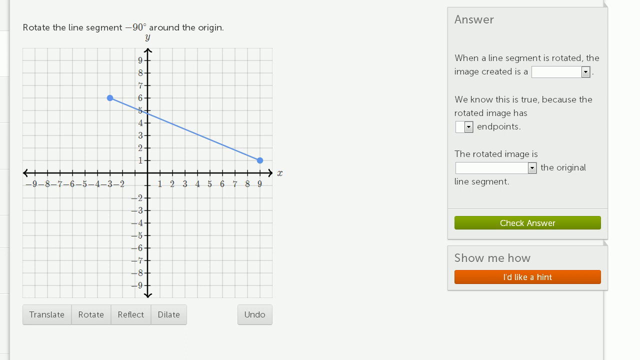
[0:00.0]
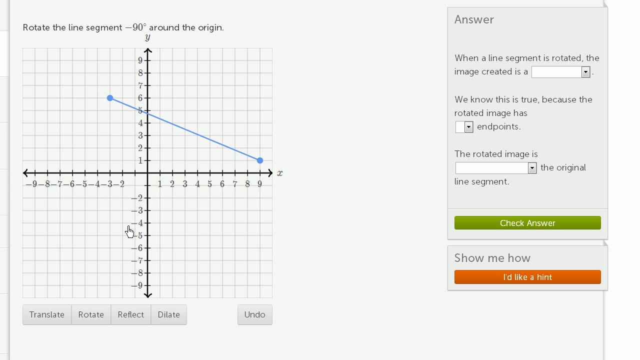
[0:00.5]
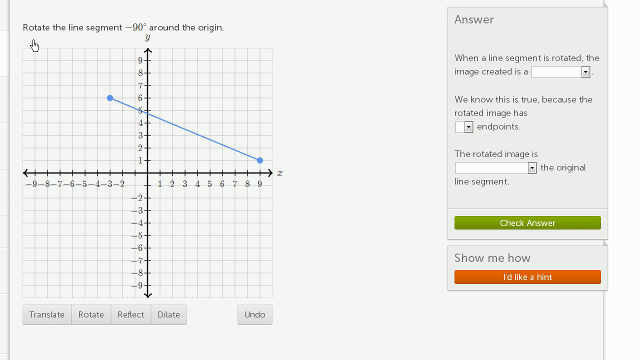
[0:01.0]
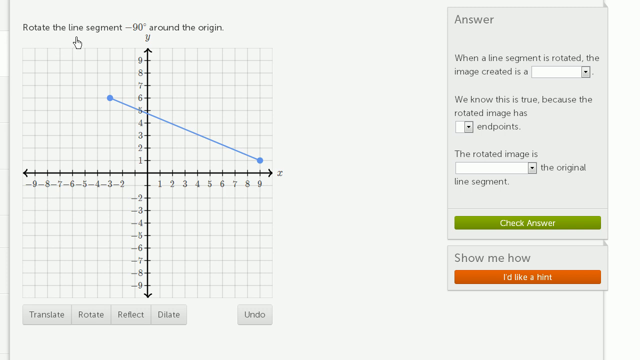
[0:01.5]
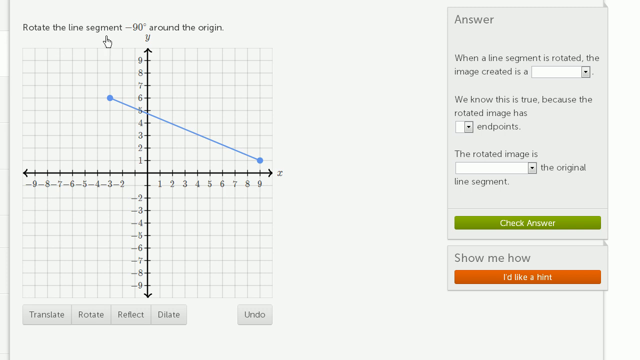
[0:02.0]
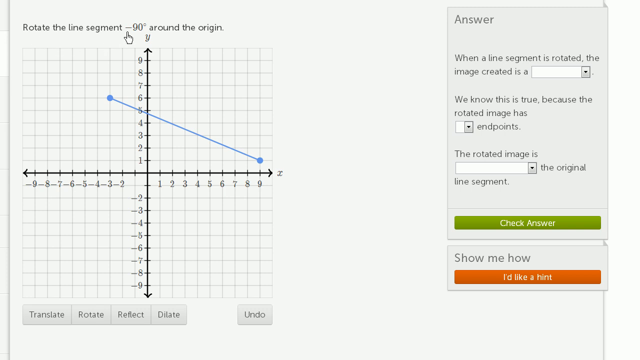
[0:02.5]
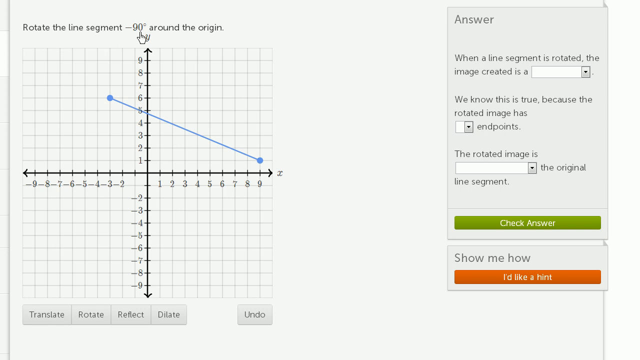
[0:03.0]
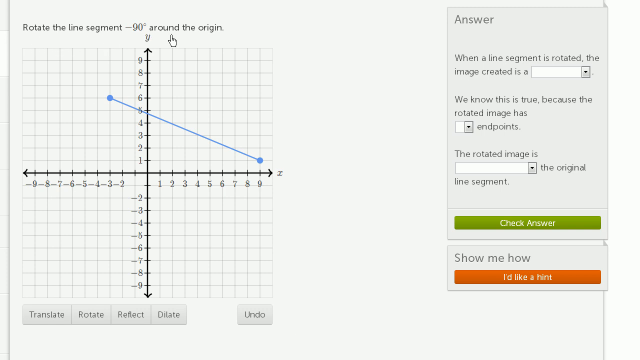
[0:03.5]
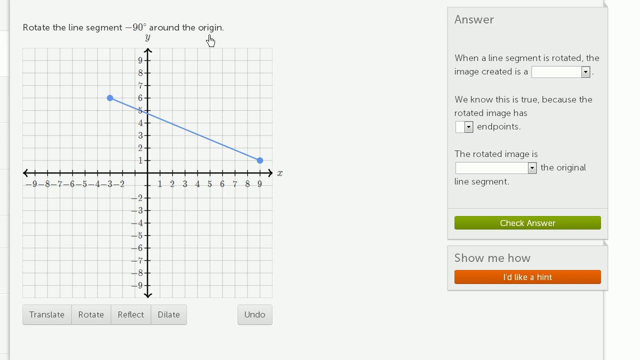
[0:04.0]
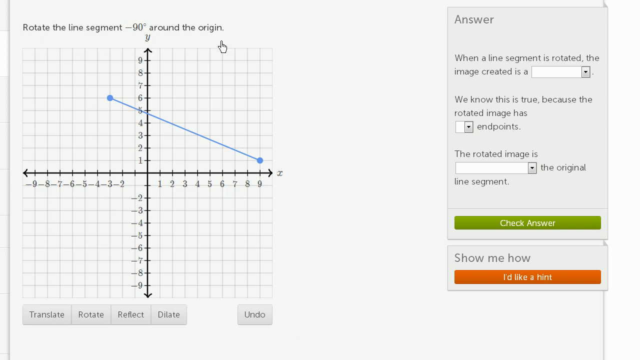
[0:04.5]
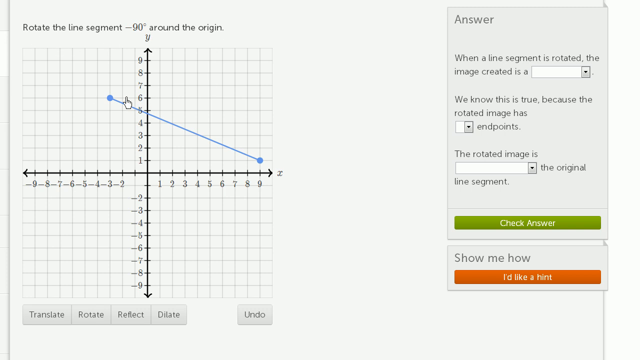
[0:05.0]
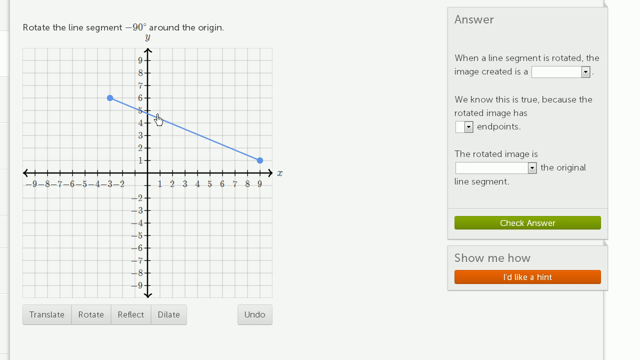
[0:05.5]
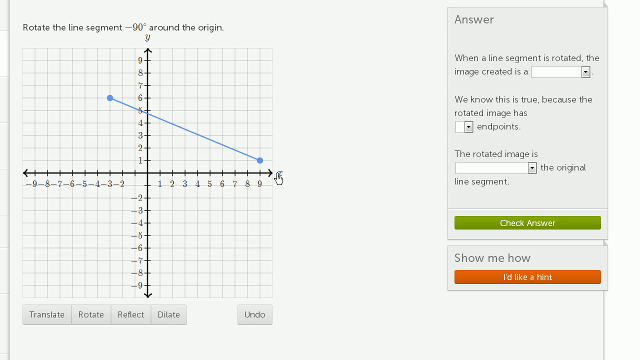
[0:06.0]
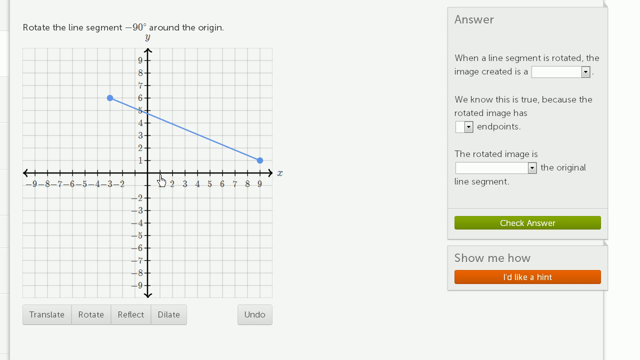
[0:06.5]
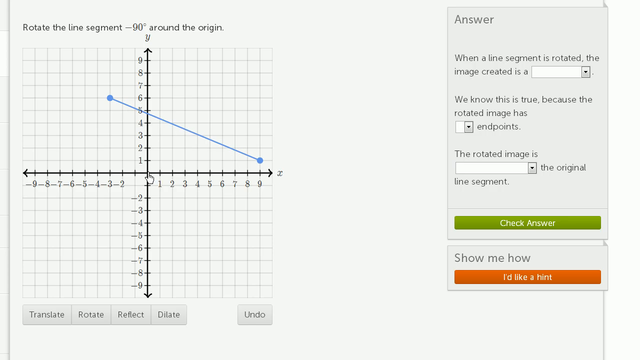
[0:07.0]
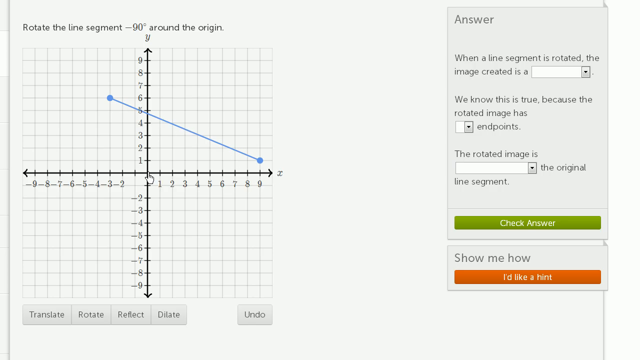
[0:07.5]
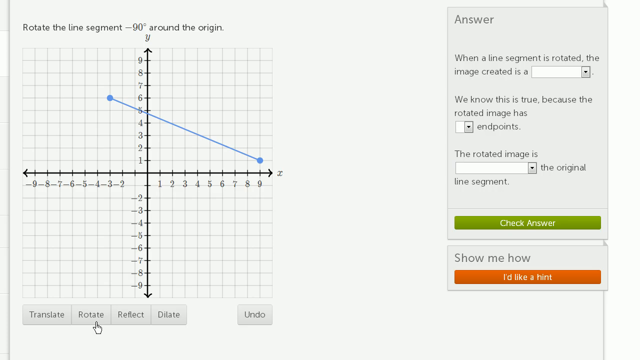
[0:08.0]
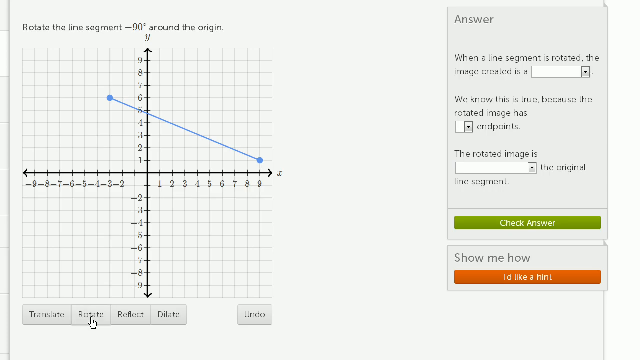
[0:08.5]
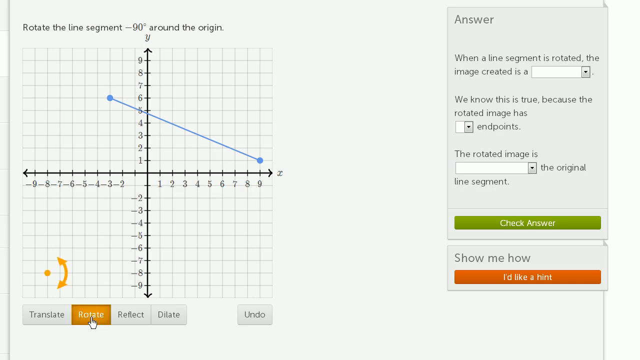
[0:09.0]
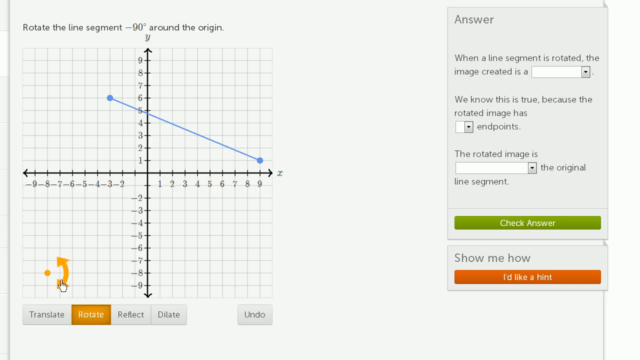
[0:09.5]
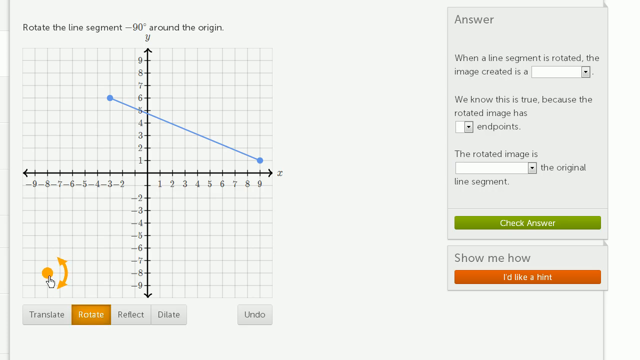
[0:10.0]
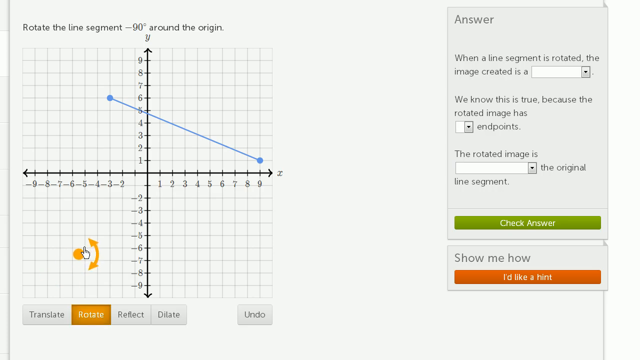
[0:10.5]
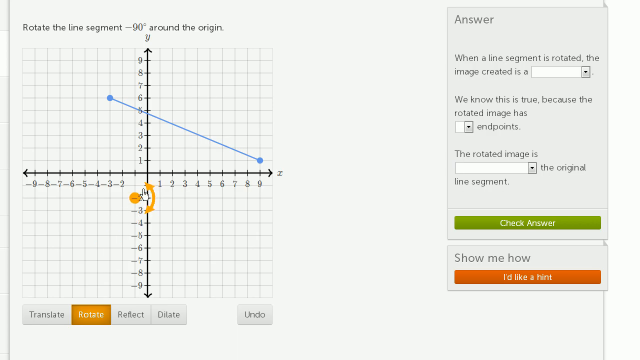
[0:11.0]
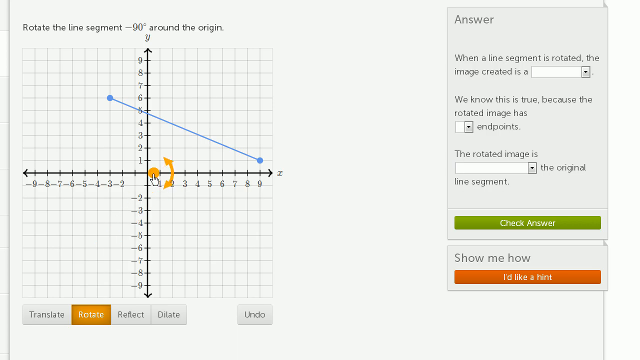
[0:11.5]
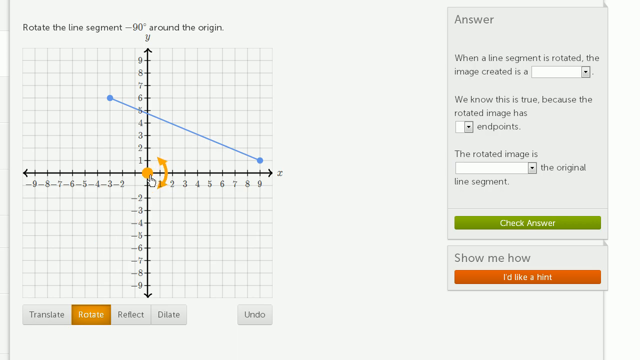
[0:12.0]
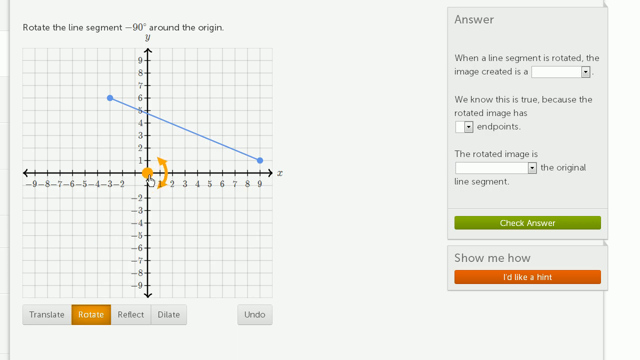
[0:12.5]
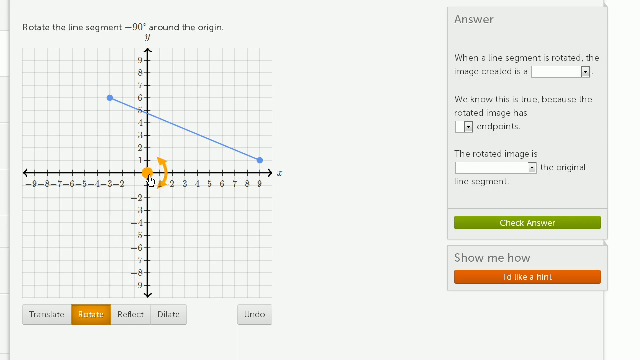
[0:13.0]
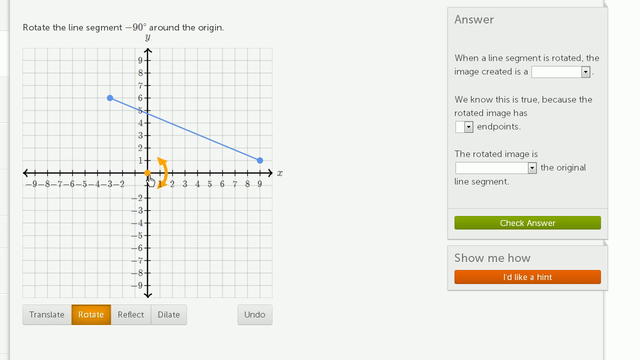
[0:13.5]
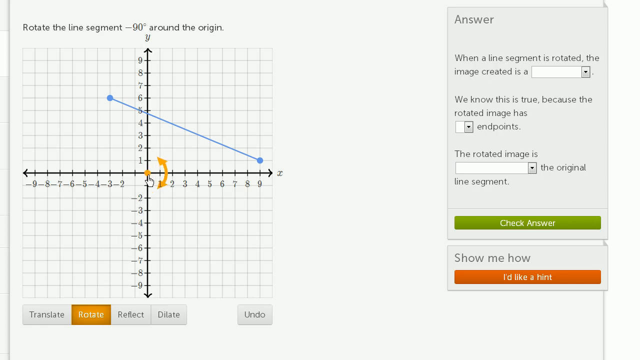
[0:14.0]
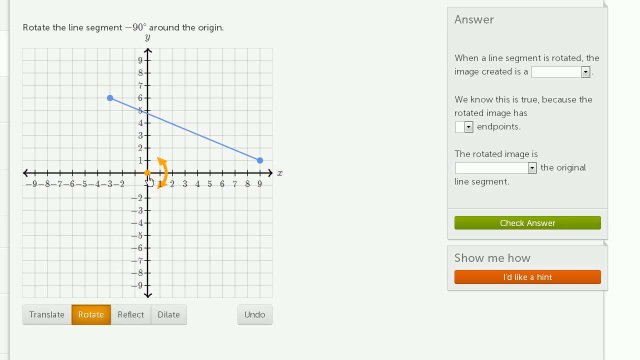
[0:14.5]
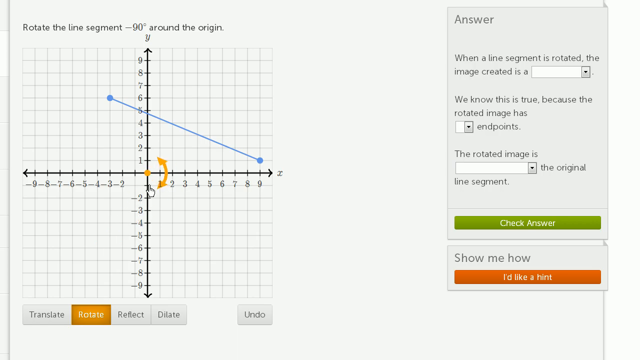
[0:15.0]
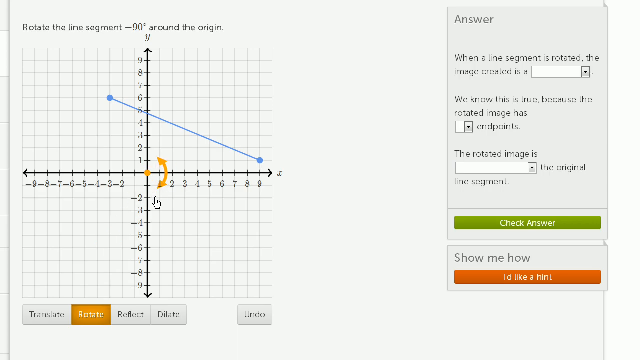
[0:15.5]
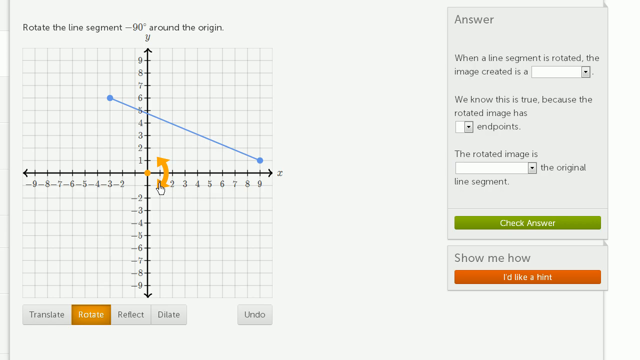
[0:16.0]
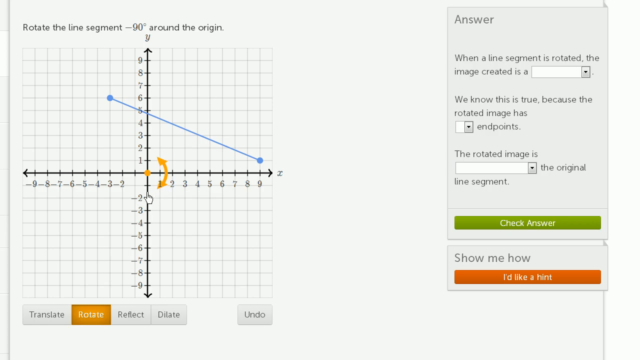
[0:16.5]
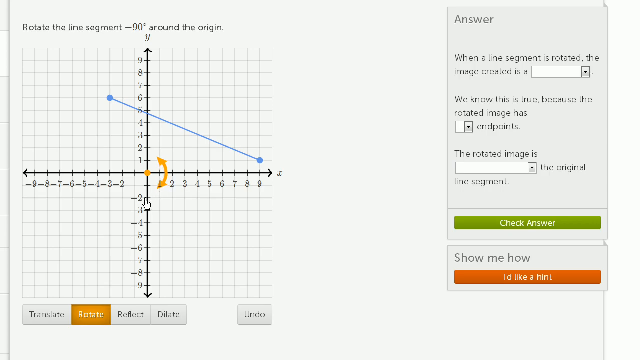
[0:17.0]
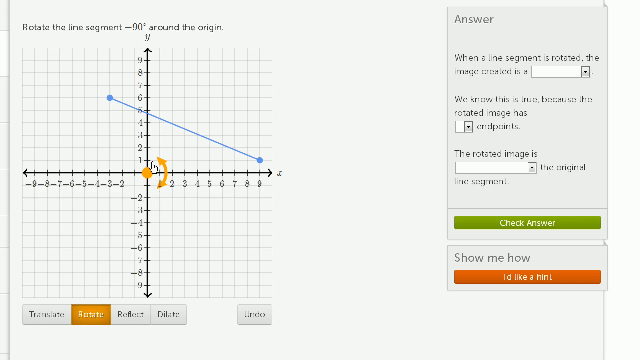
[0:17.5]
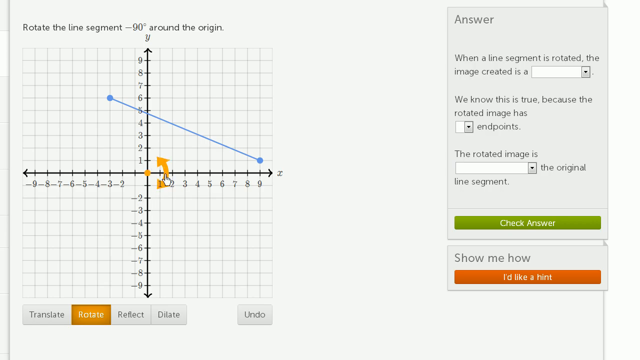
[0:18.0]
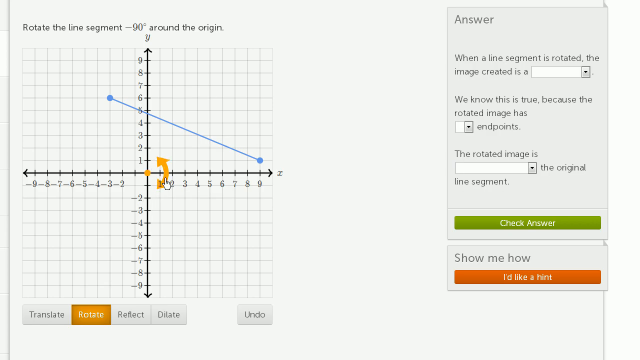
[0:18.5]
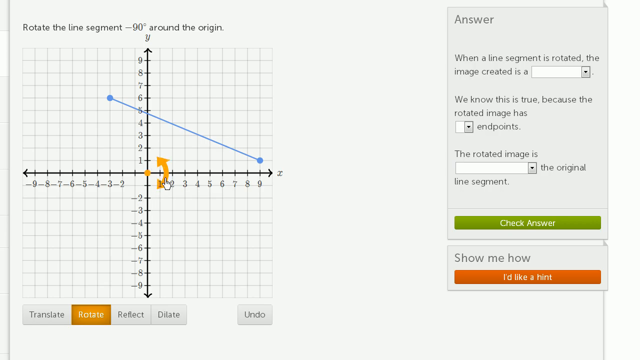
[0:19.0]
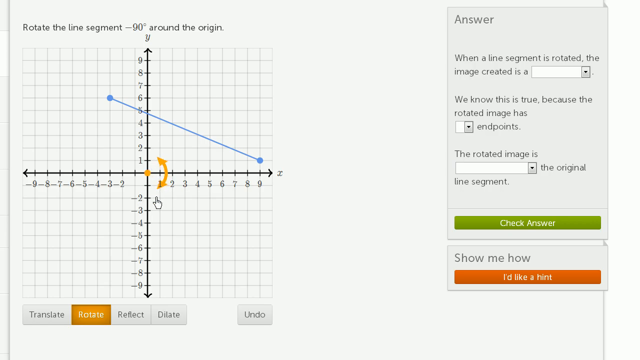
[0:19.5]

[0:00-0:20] The video opens on a task that reads "Rotate the line segment minus 90 degree around the origin." A coordinate system with X and Y axes holds a line segment with one point at (-3, 6) and the other at (9, 1). The person demonstrates the task by clicking the rotate button and moving the mouse to the point (0, 0). Other options are visible: translate, reflect, delete and undo. On the right side of the screen is an answer table with sentences containing blanks: "When the line segment is rotated the image created is a" followed by a blank; a second sentence, "we know this is true because the rotated image has" followed by a blank and "points"; and "The rotated image is" followed by a blank and "the original line segment." There is a button to check the answer, and another panel with "show me how" and apparently an option to ask for a hint.